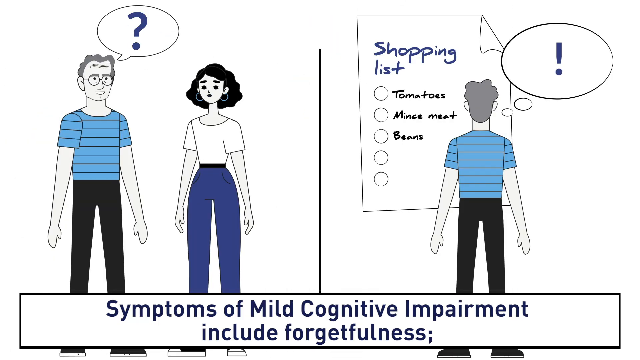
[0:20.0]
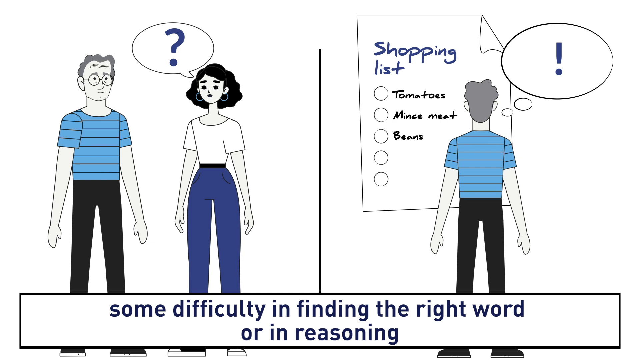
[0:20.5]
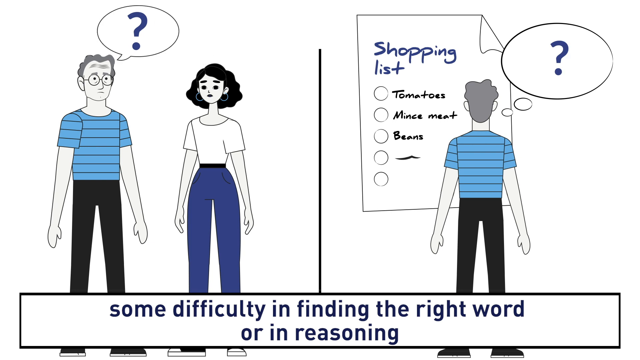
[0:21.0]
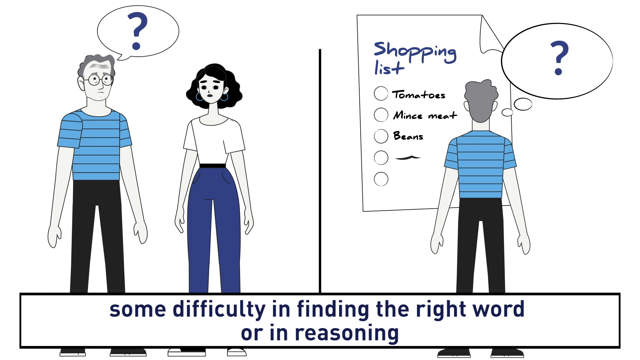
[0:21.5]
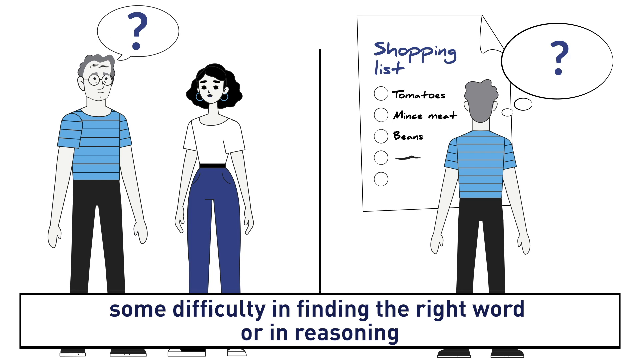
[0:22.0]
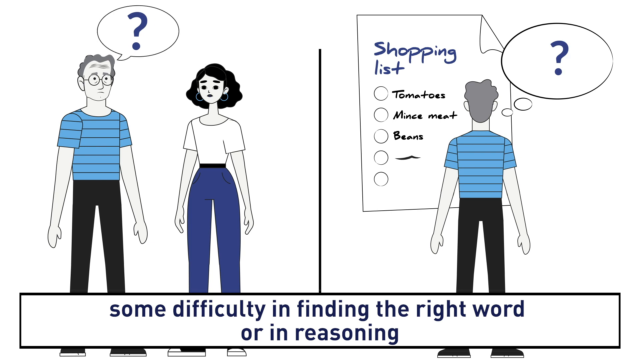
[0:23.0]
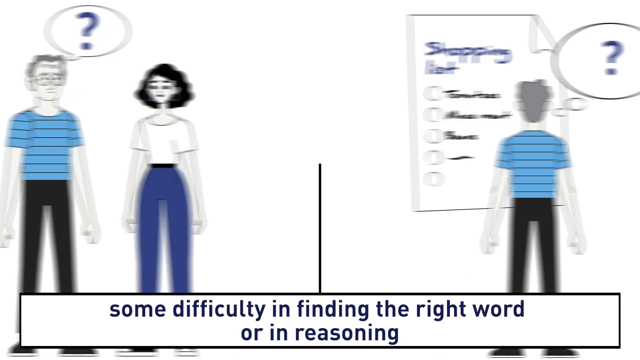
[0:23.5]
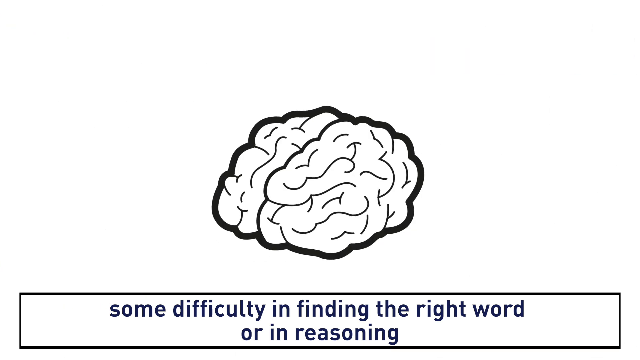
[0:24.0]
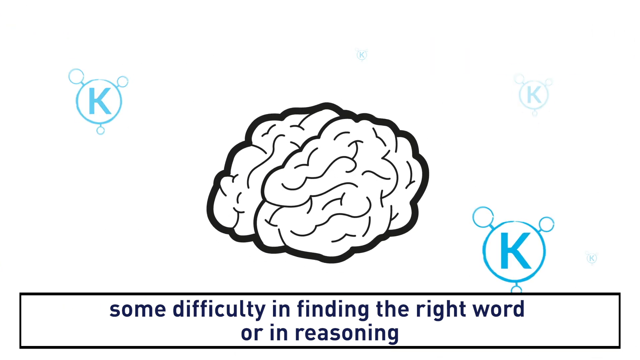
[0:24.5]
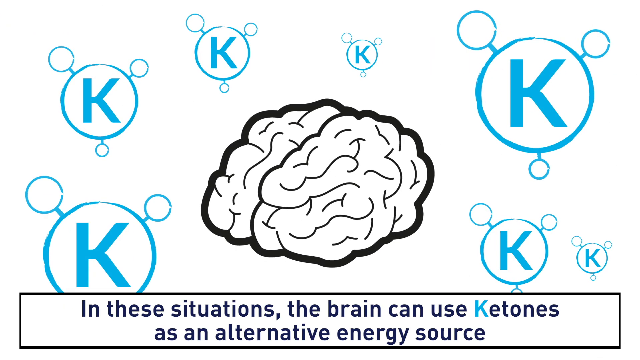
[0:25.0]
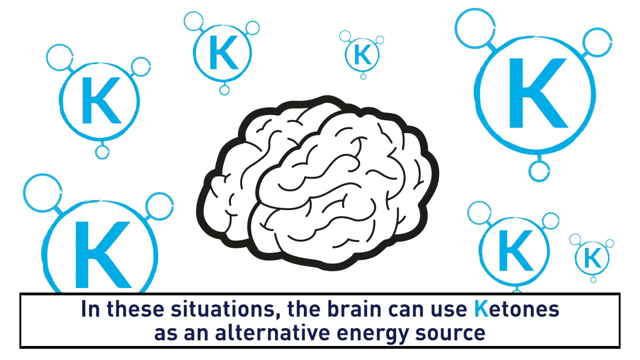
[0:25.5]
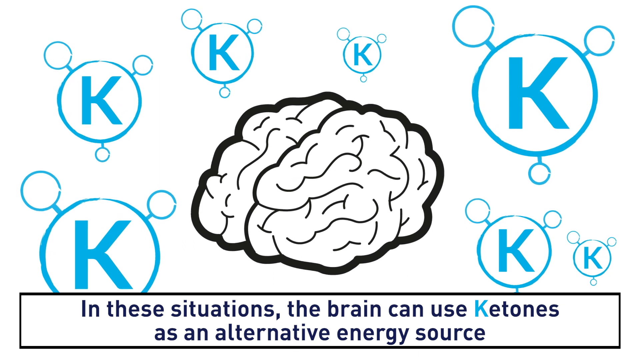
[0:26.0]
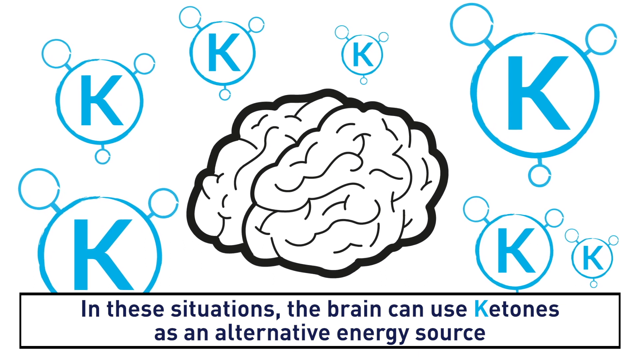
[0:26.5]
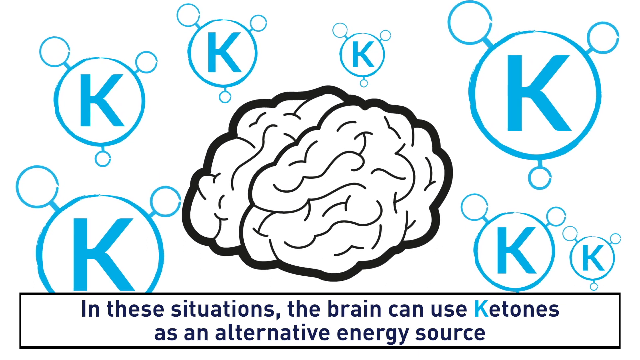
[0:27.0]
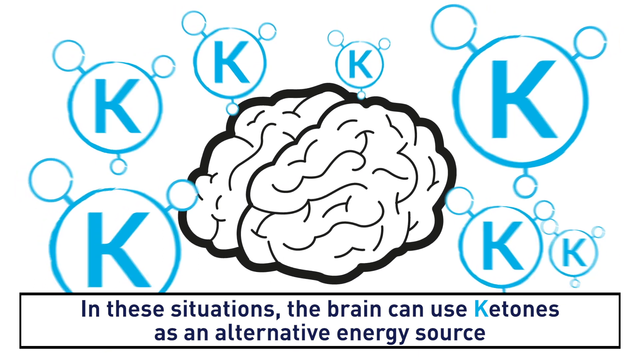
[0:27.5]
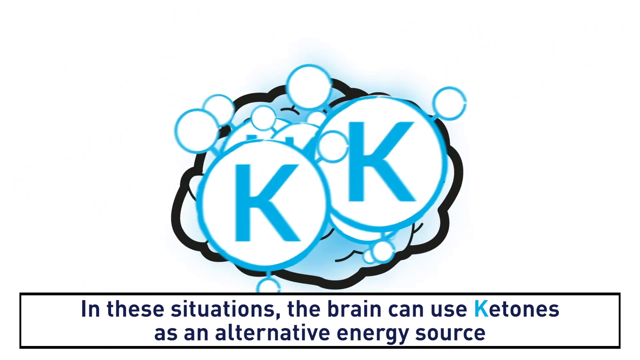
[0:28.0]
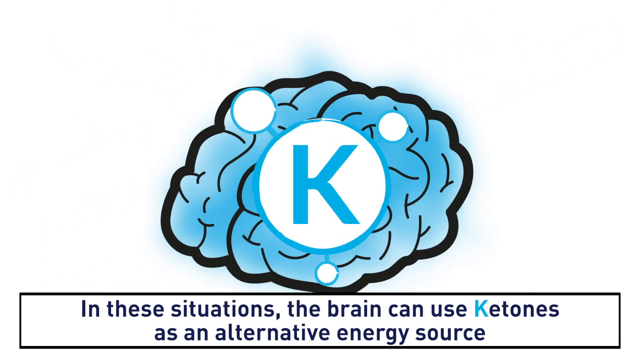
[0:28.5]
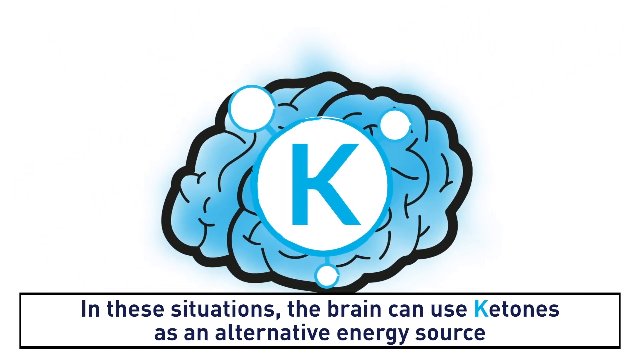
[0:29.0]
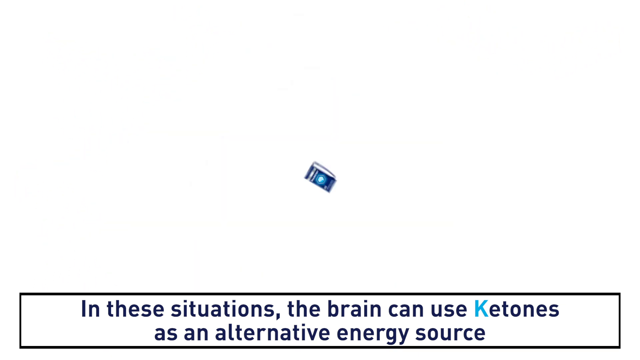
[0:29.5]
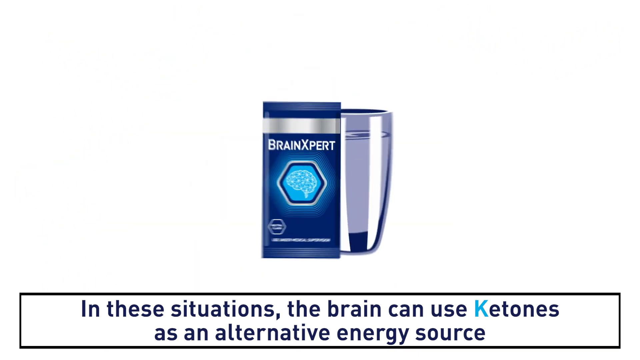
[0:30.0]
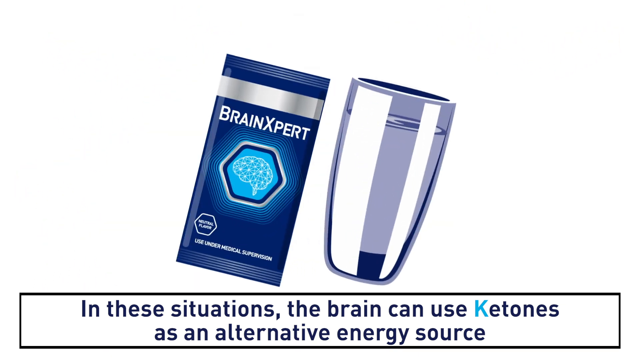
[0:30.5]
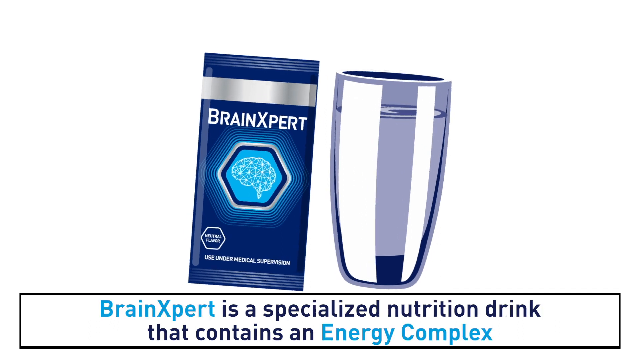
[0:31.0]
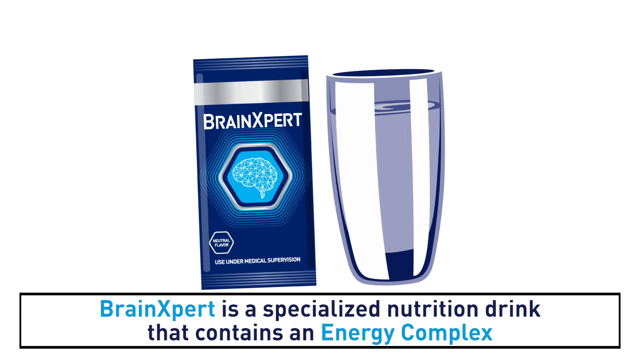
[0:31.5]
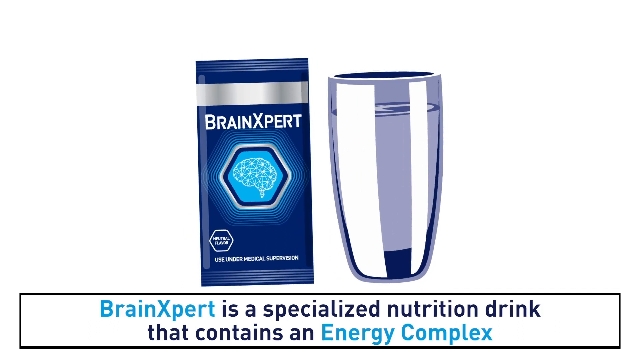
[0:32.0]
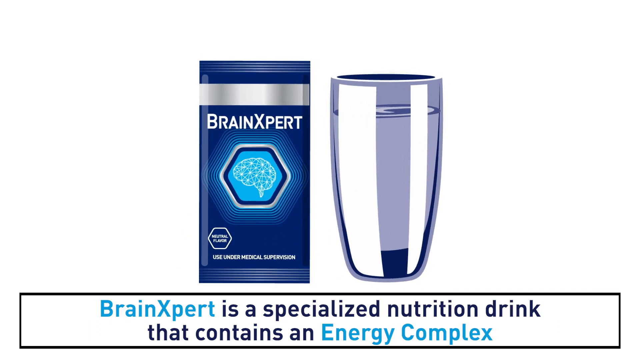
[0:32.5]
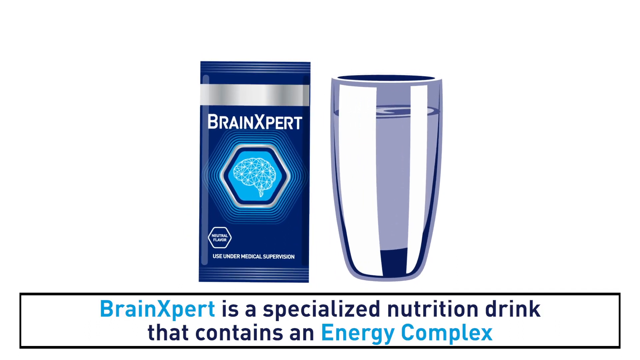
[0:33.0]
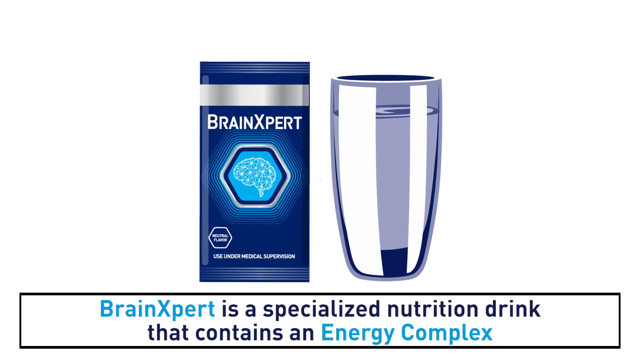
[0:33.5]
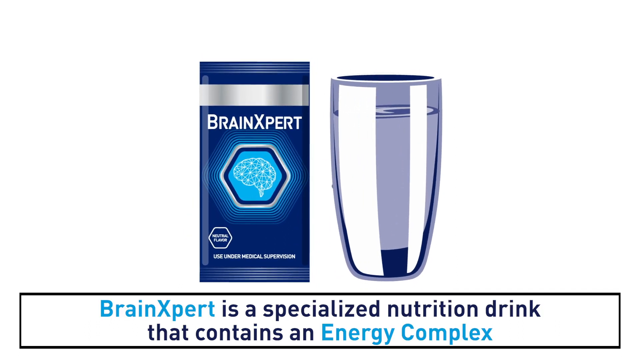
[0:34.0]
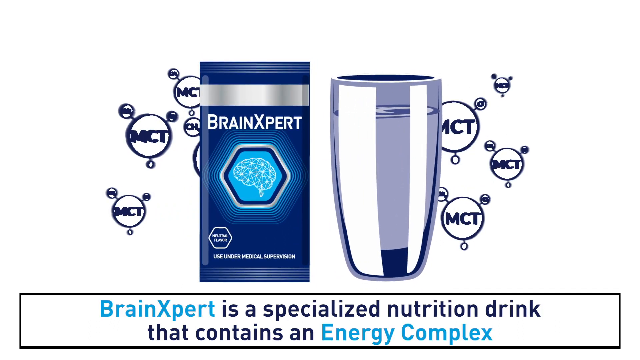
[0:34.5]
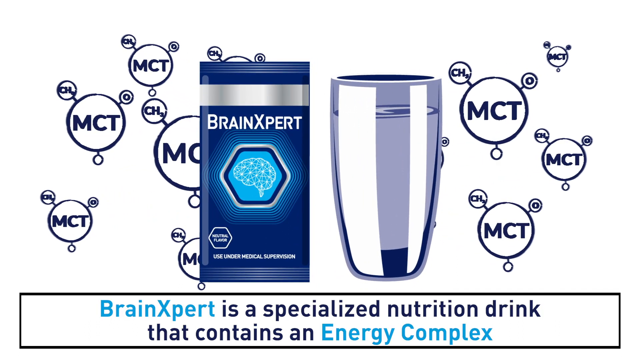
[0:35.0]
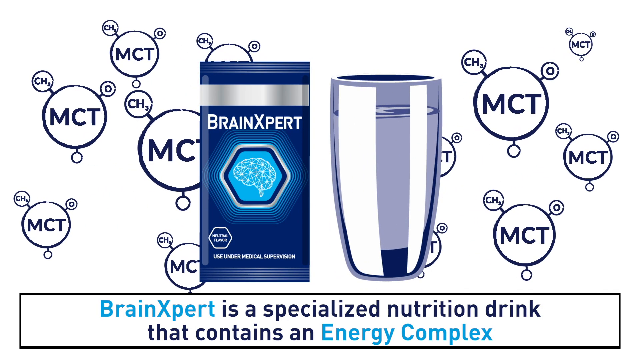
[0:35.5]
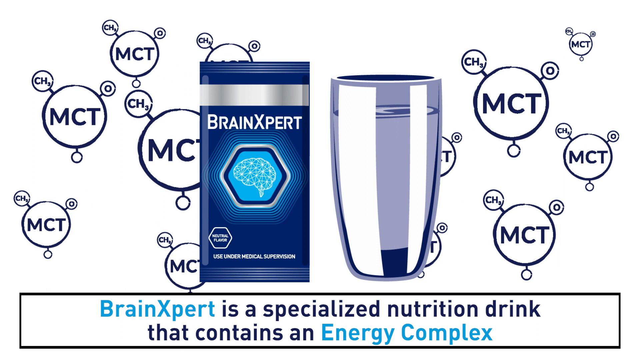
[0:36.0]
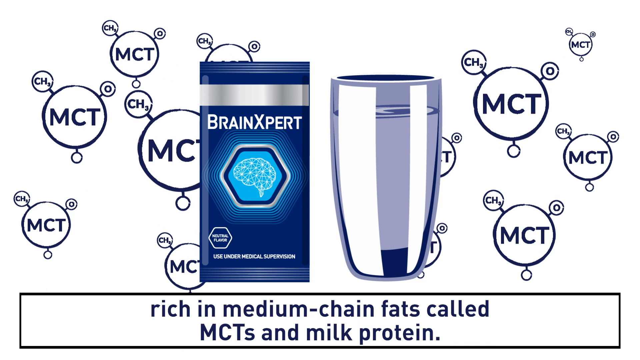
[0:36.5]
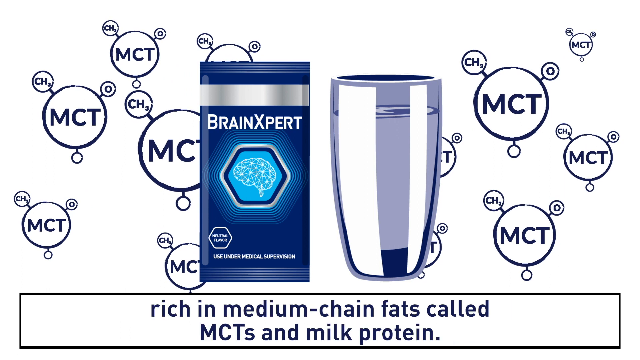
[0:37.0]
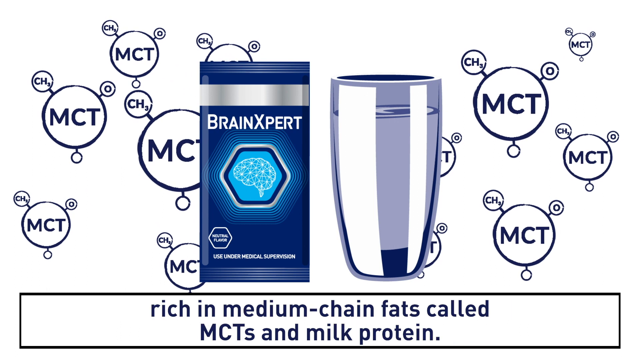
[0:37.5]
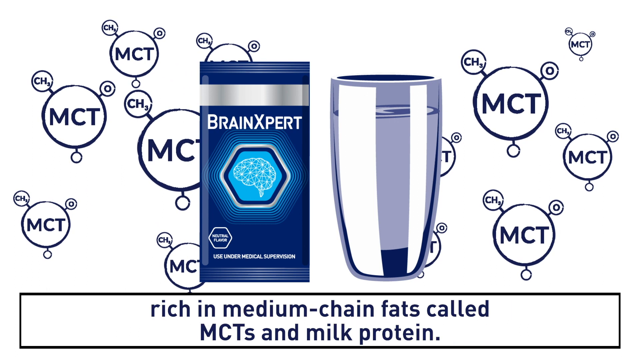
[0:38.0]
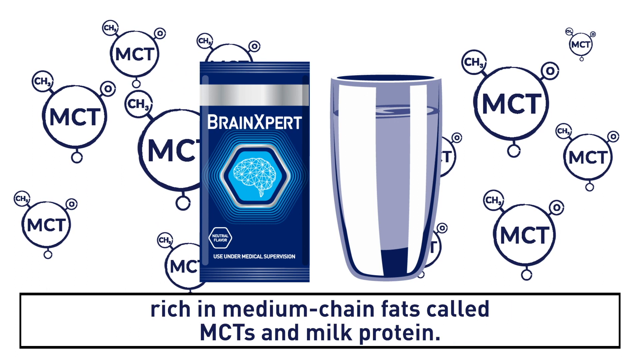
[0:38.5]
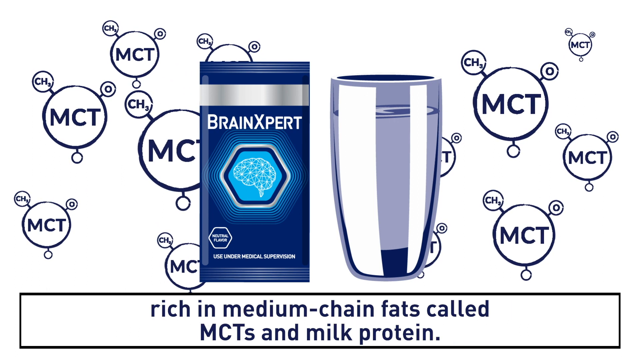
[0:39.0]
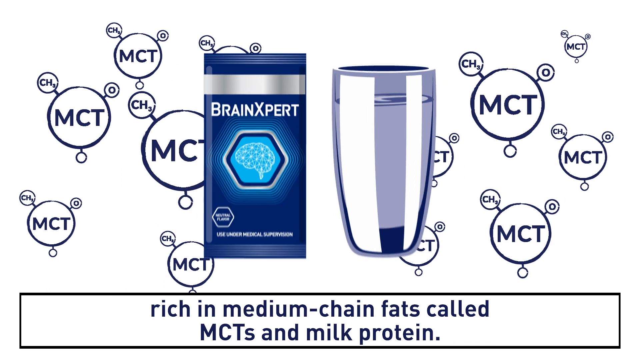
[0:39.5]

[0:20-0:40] The screen has animation at the top and text at the bottom reading "symptoms of mild cognitive impairment include forgetfulness". The top is divided in half into two scenes. On the left are a male in black pants and a blue striped shirt with horizontal black stripes and, on the right of him, a woman in blue pants and a white short-sleeved shirt; a question mark is above the male. On the right side the same male is looking at a shopping list and has a thinking bubble containing an exclamation mark. The list reads tomatoes, mincemeat and beans, with a circle beside each one, and the fourth item is just a squiggle. Over on the left, he now has a question mark. The view then splits off to the side to show the brain, with a circle on its left and right: each circle has a large capital K inside and three little circles attached to it. More of these appear until there are seven on the page. They all grow and then go inside the brain, leaving a large letter K in a circle with three small circles attached inside the brain. The next scene shows a product called Brain Expert, blue and silver, with a hexagon on the cover and a brain inside the hexagon; to the right is a cup. Both are tilted about 10 or 12 degrees to the right while the bottom text says "in these situations, the brain can use ketones as an alternative energy source". The two images rock back and forth and become vertical again. The bottom text then says "brain expert is a specialized nutrition drink that contains an energy complex". From behind the two images come large circles with "MCT" inside, each with a little circle that says "CH3", another little circle that says "O" and a third, empty circle; twelve of them are scattered behind the two images.